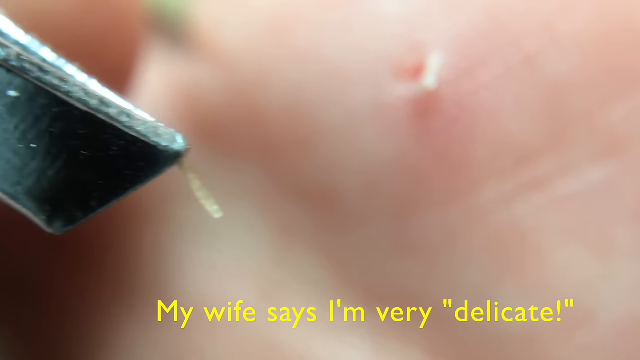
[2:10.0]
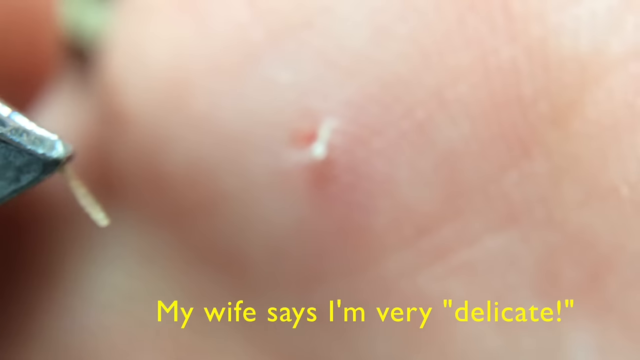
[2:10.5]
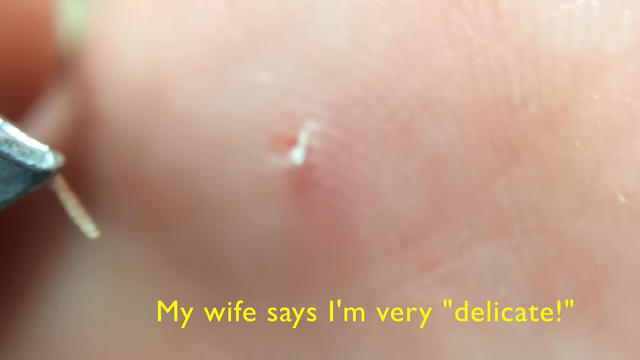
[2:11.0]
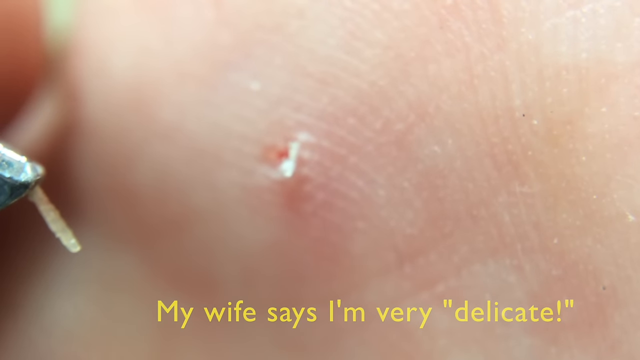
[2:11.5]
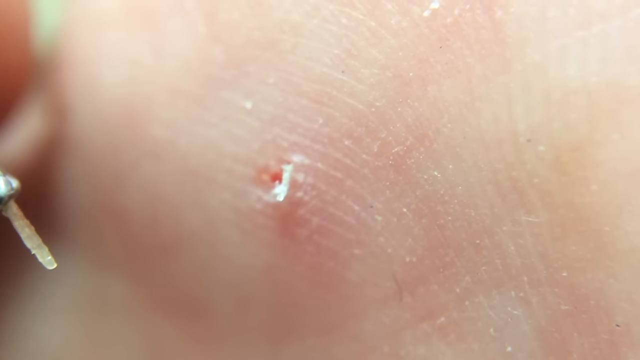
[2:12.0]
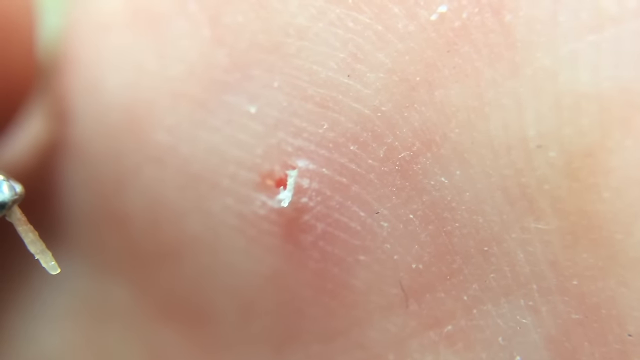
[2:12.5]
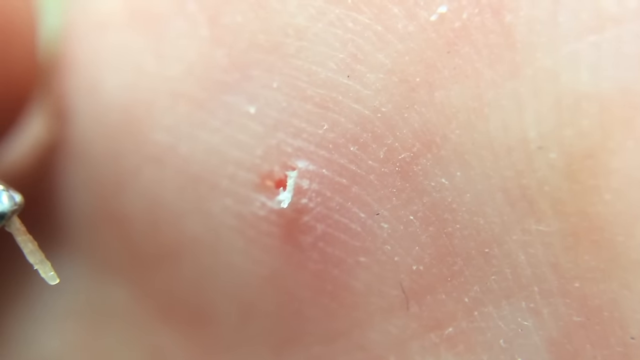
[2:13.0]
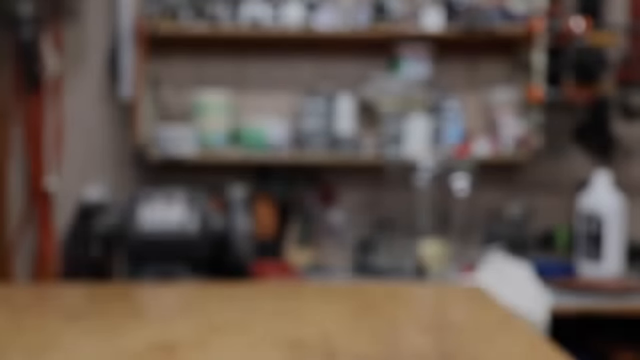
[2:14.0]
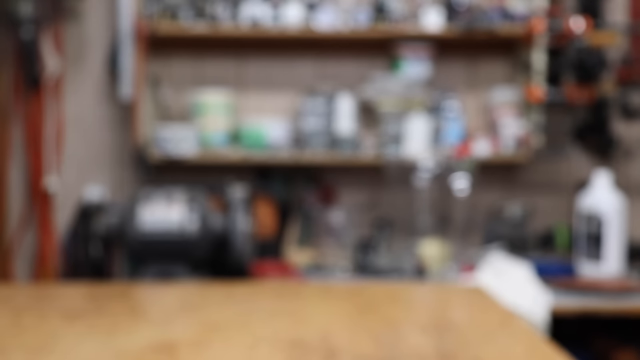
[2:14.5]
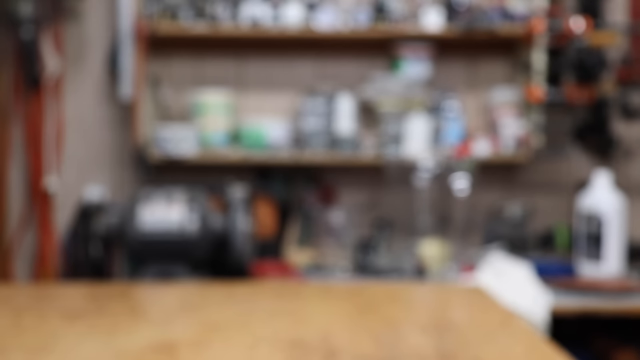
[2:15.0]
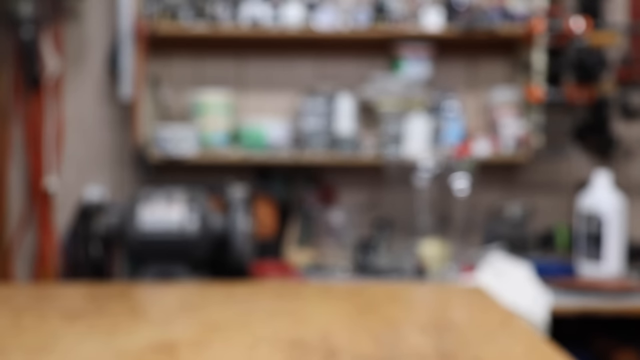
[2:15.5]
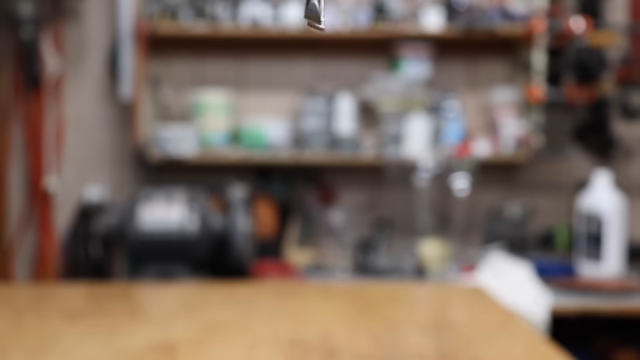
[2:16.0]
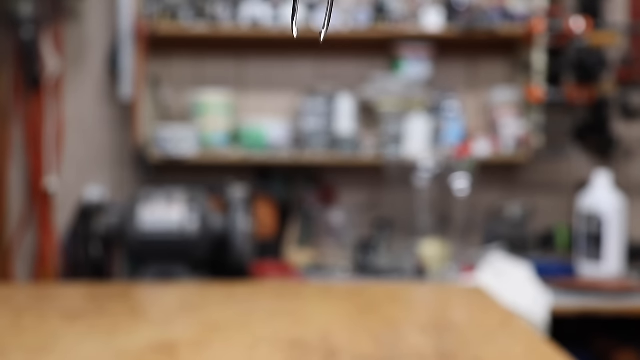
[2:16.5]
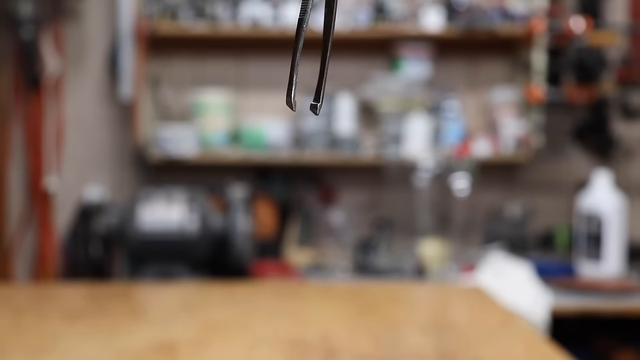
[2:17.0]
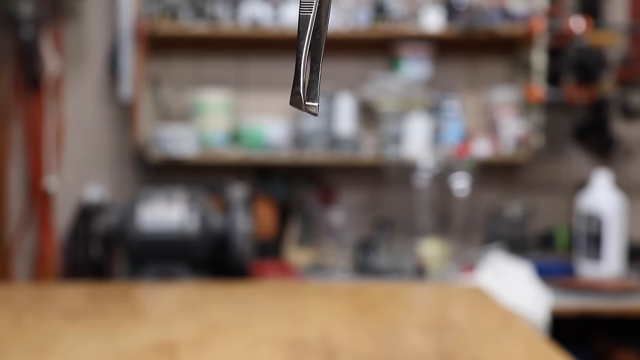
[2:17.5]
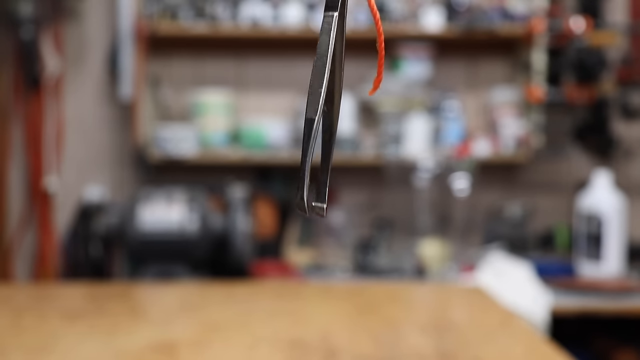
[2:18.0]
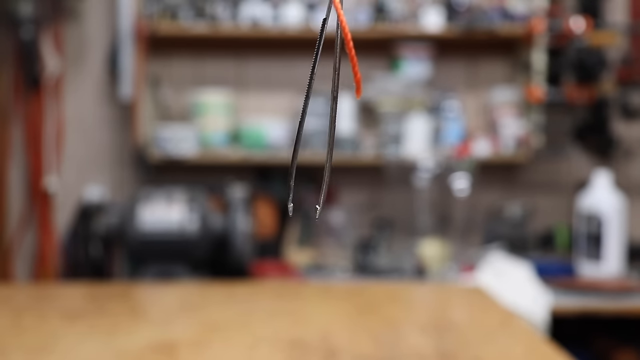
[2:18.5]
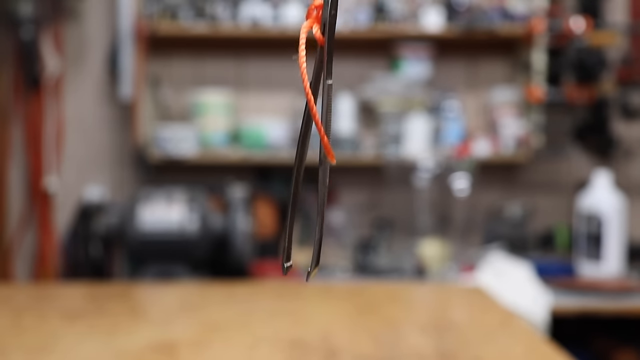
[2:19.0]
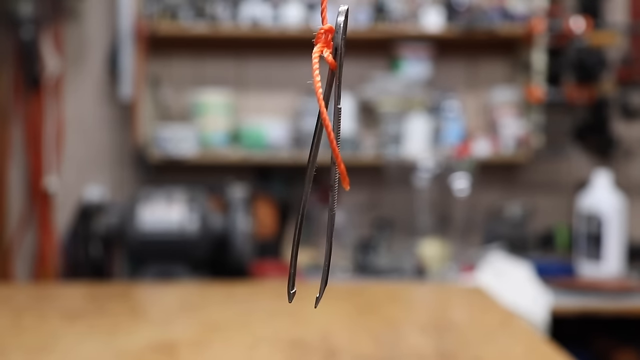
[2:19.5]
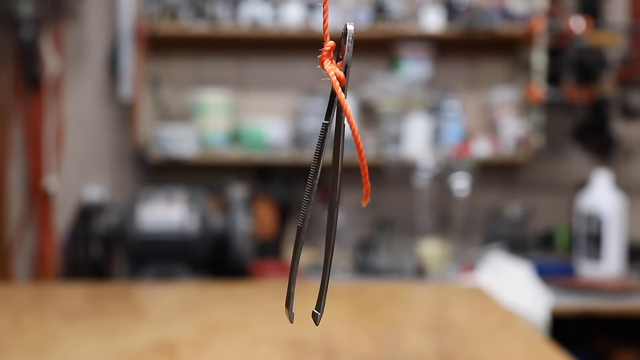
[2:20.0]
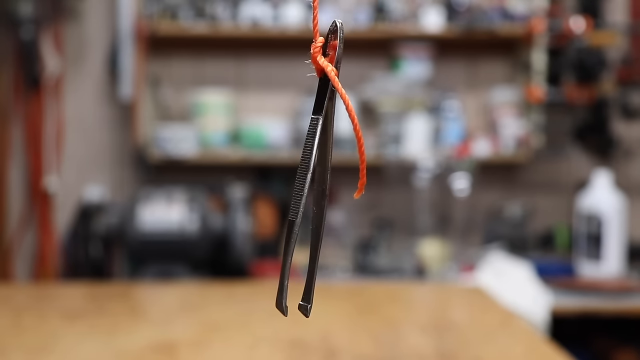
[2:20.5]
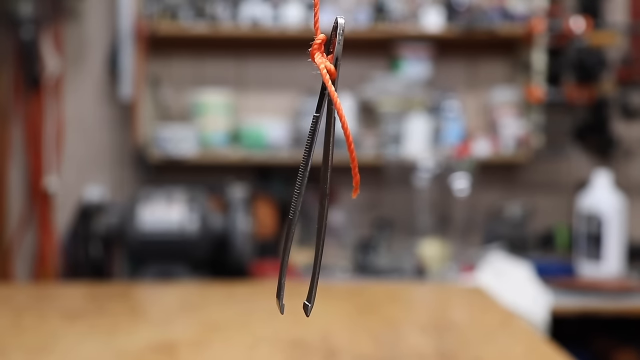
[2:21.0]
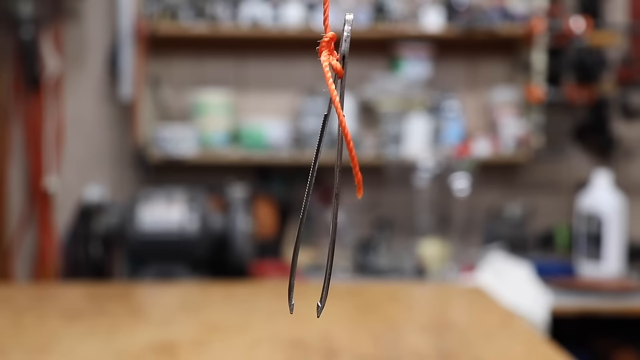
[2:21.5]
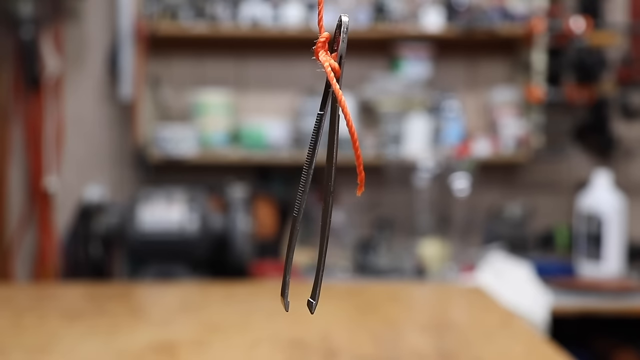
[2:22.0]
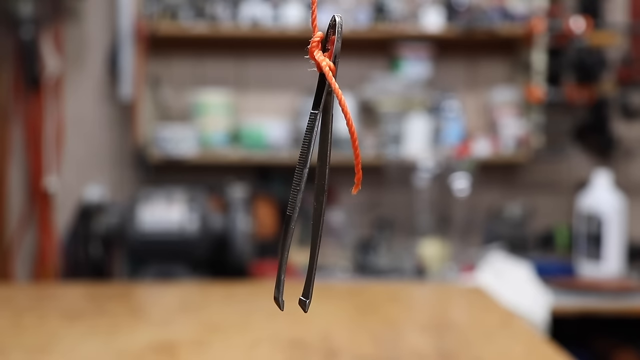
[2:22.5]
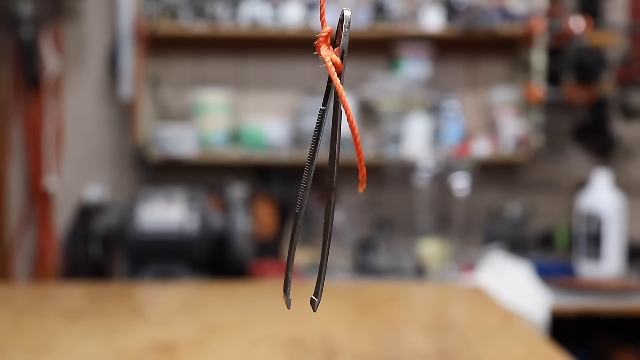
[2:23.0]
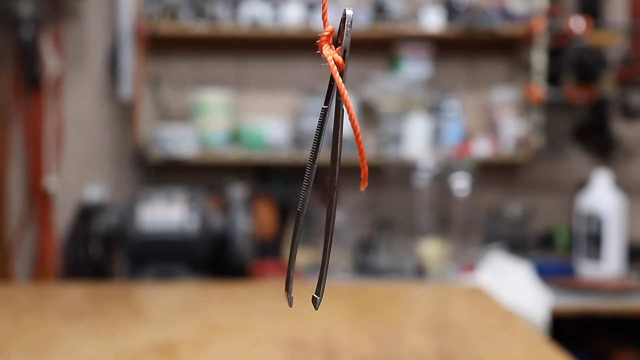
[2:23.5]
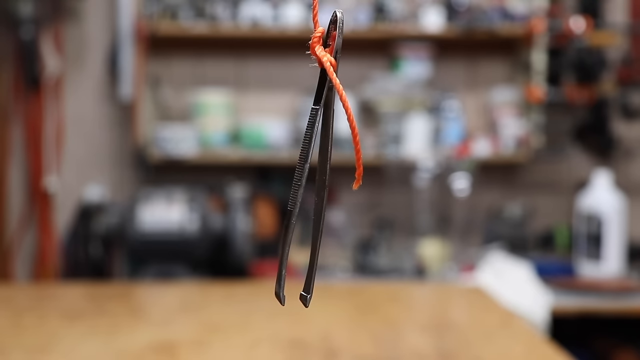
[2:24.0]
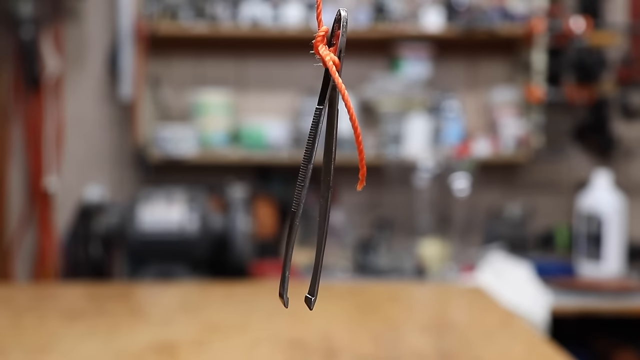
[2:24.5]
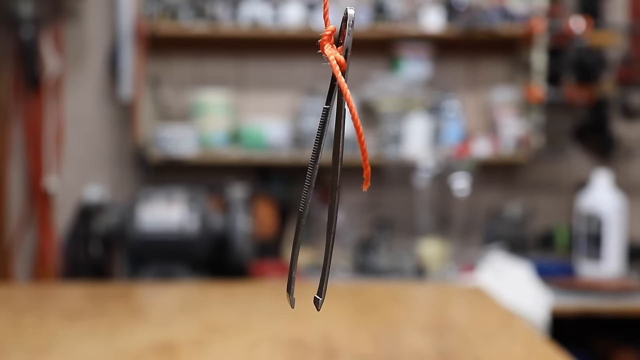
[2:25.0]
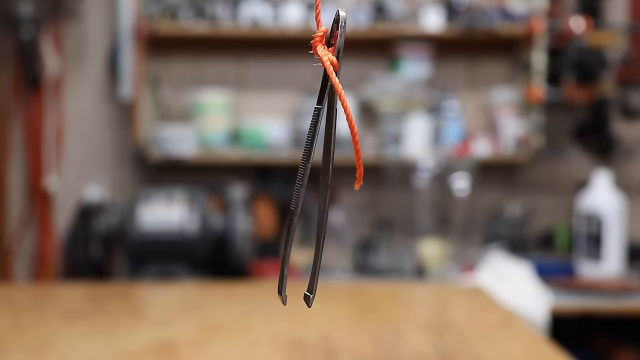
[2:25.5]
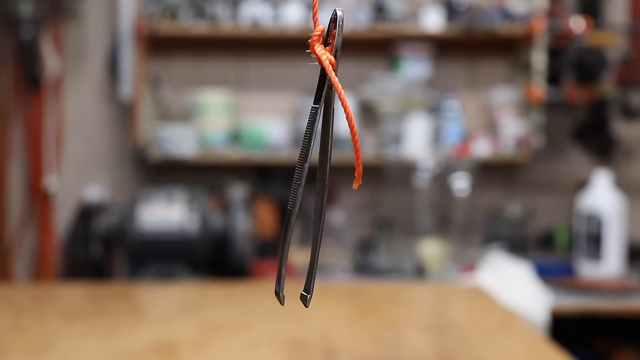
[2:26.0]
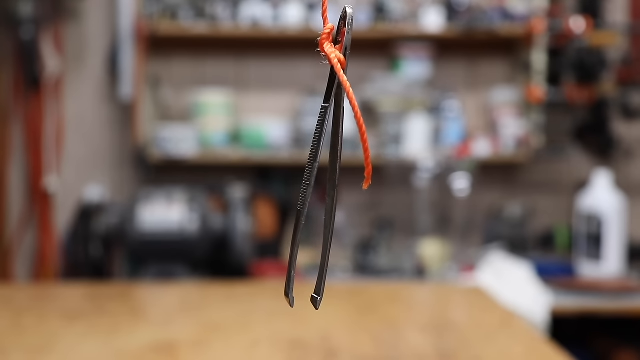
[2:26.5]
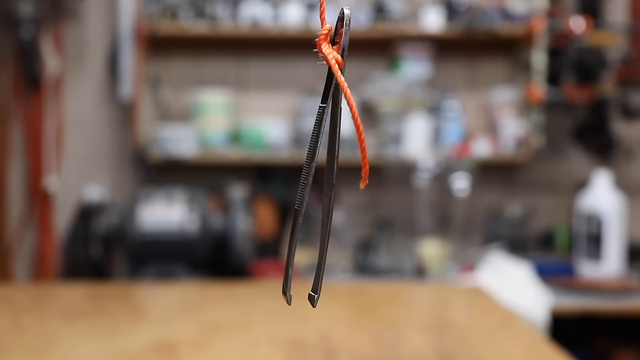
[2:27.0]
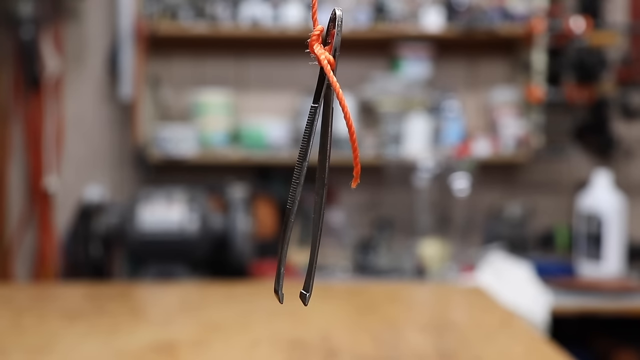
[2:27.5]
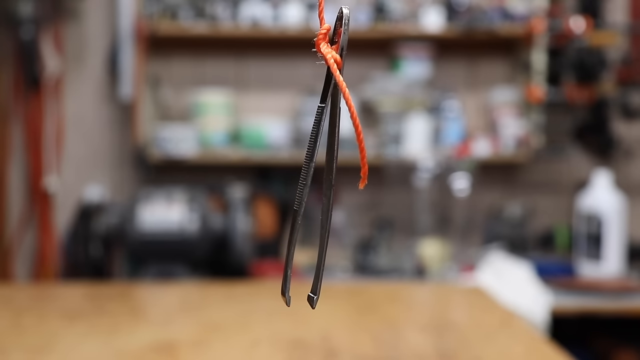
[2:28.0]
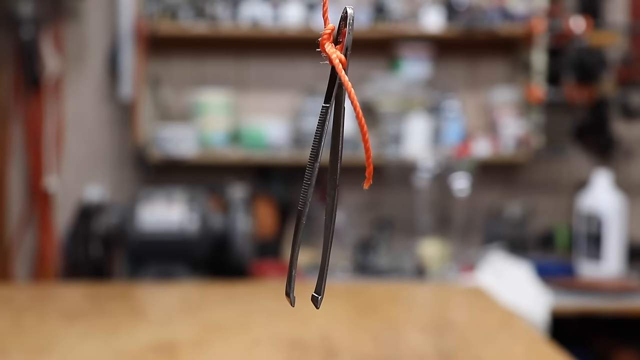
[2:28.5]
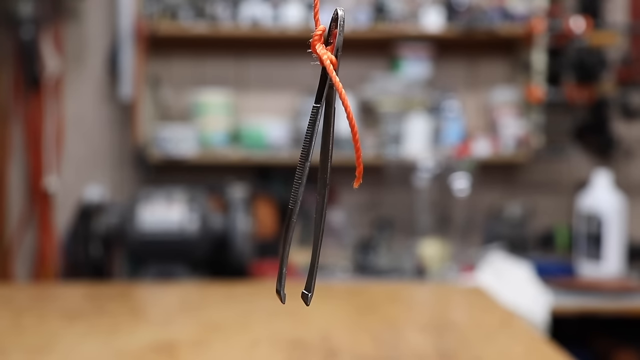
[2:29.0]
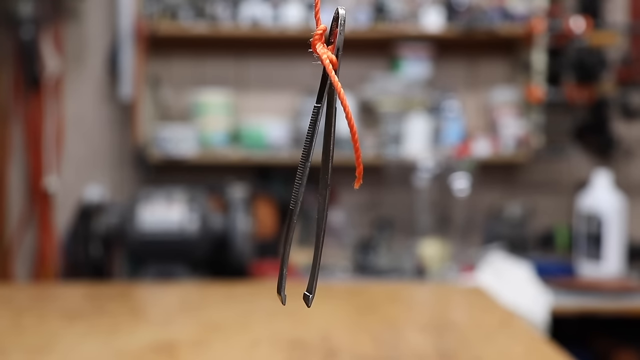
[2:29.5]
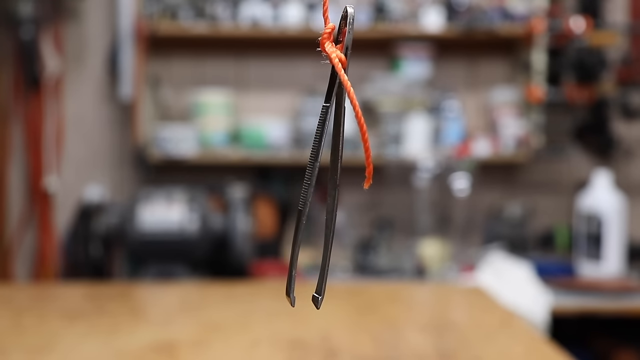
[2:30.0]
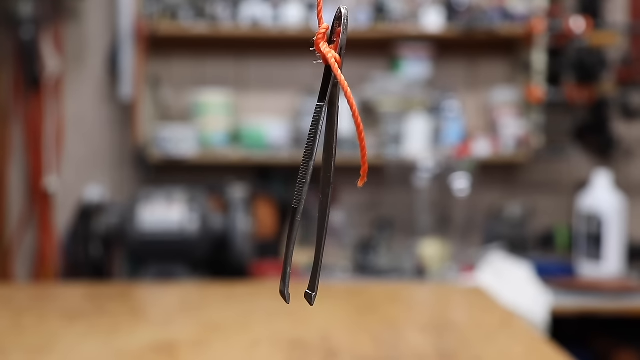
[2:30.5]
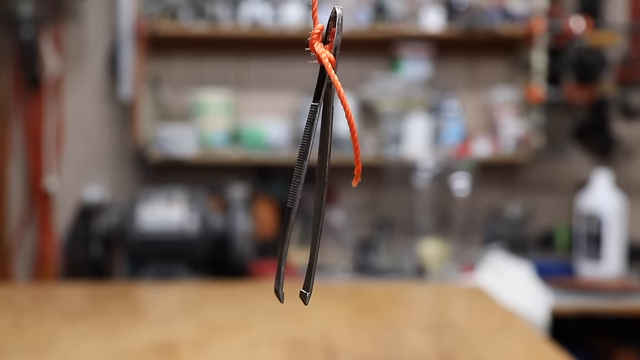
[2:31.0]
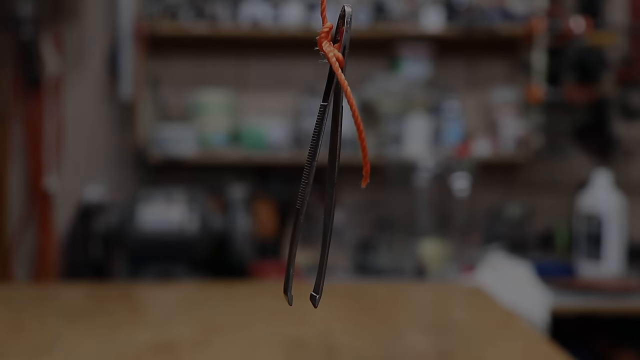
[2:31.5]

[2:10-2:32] A close-up shows the palm of somebody's hand with a red area that has a little blood in it: a hole with white skin around the outside on top of it. On the left side of the screen are the tips of a pair of metal tweezers holding a wooden splinter. Along the bottom of the screen, yellow text reads "My wife says I'm very delicate". The video then cuts to a pair of tweezers with a red string hooked to the top of them, which slowly comes into frame at the top of the screen and floats down until it is completely in the screen. In the background are a couple of wood shelves with what looks like gallons of paint and a few other things in containers.